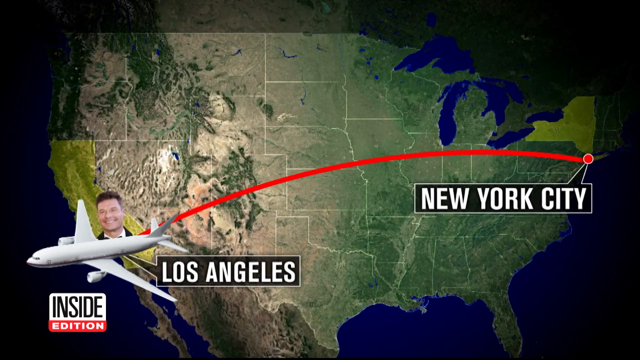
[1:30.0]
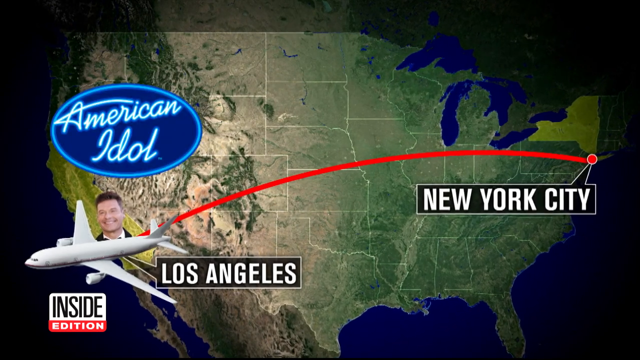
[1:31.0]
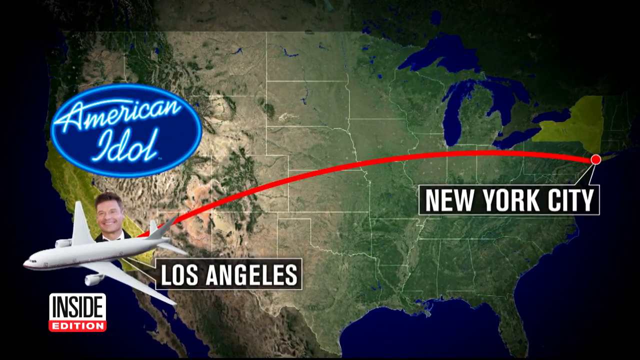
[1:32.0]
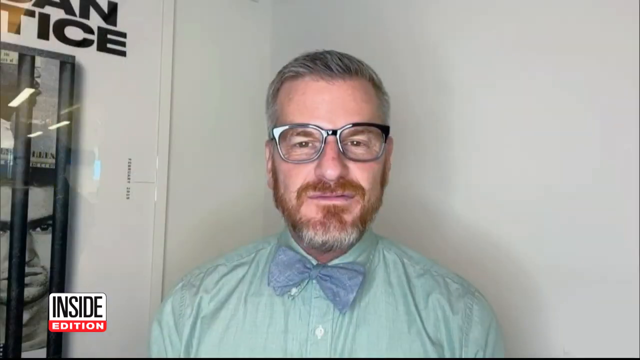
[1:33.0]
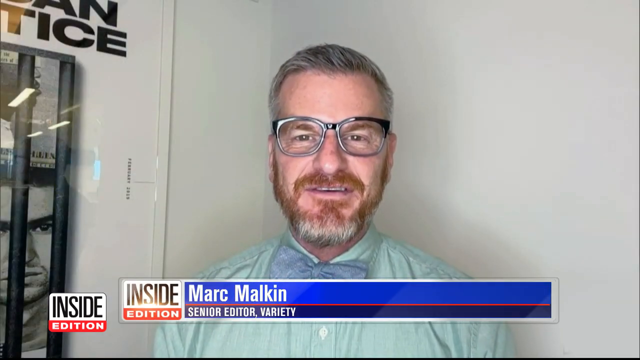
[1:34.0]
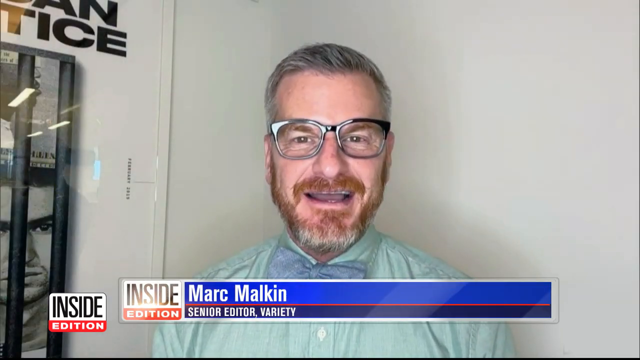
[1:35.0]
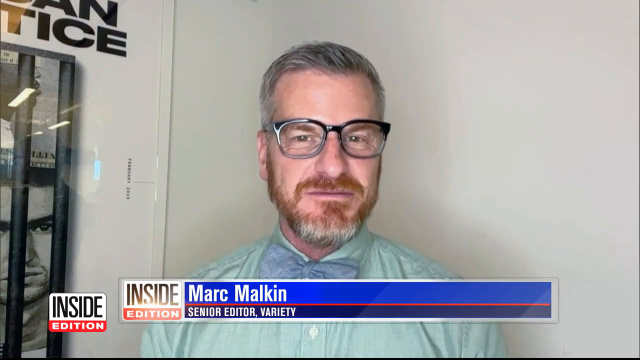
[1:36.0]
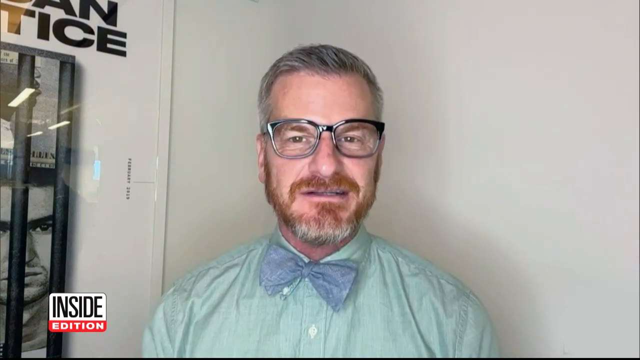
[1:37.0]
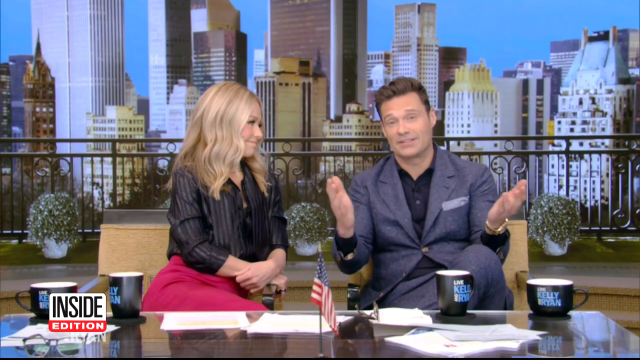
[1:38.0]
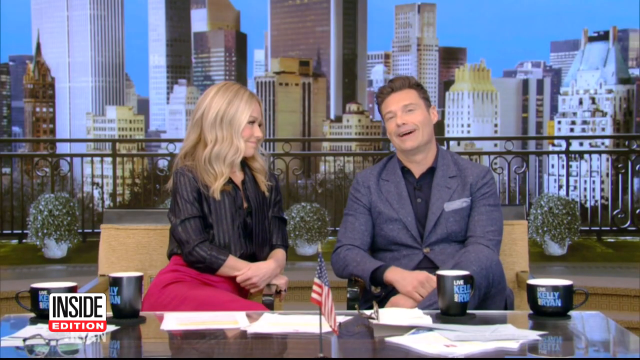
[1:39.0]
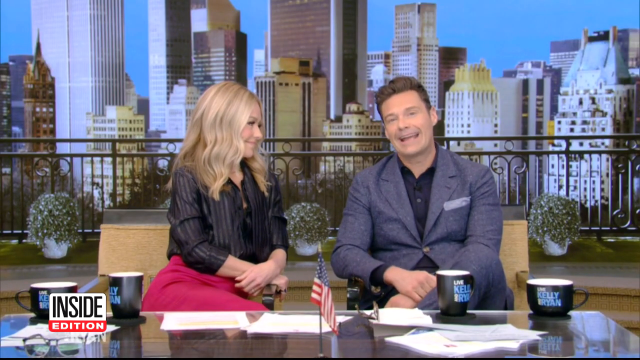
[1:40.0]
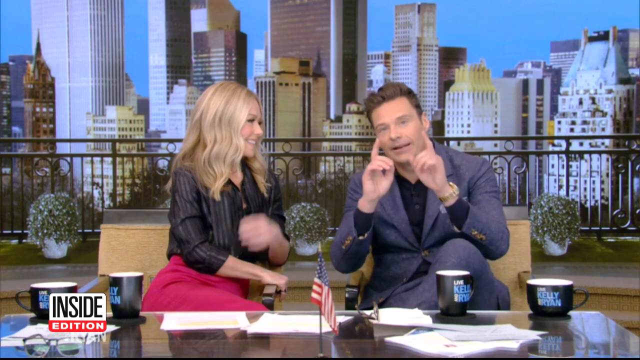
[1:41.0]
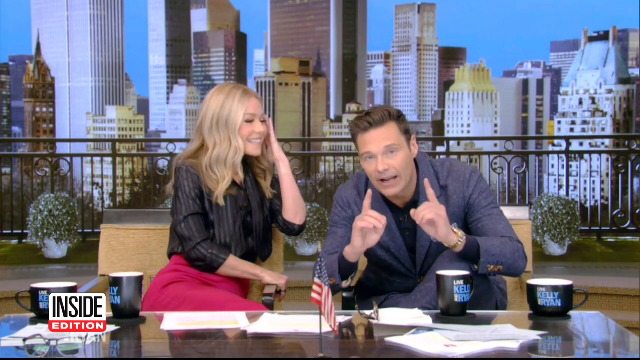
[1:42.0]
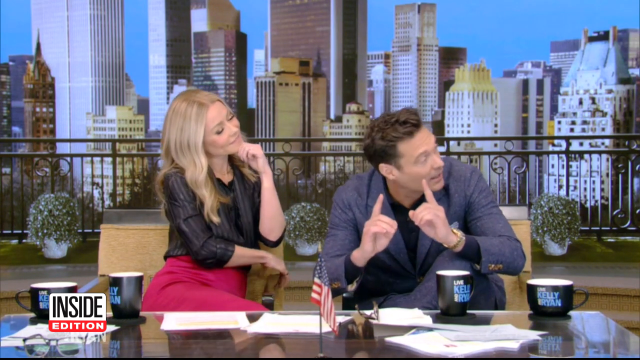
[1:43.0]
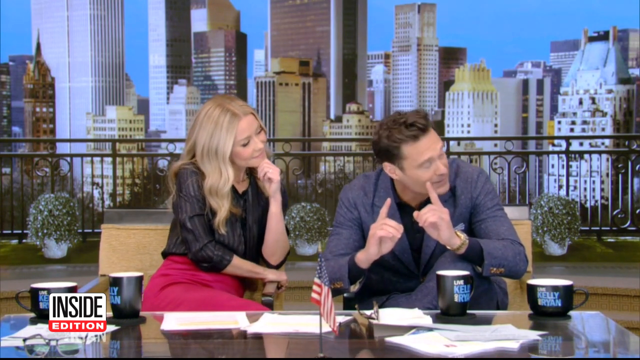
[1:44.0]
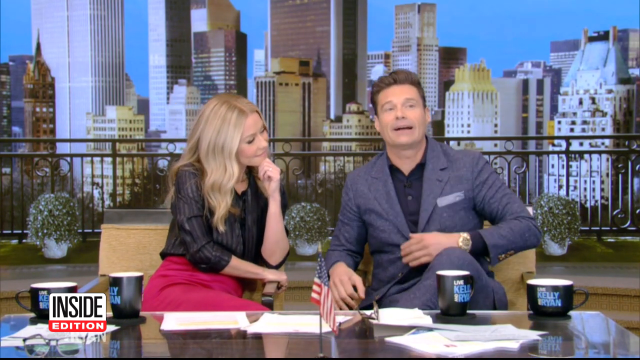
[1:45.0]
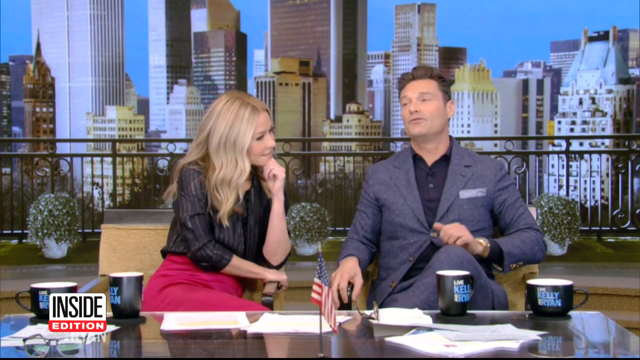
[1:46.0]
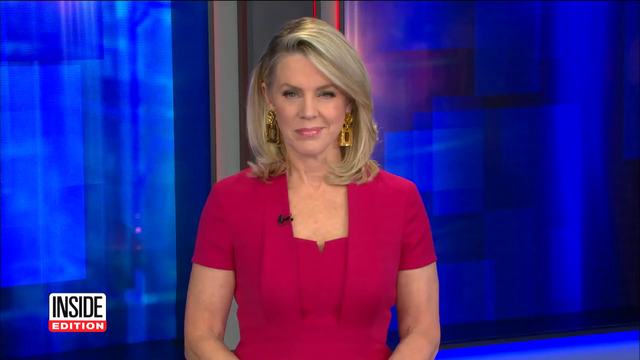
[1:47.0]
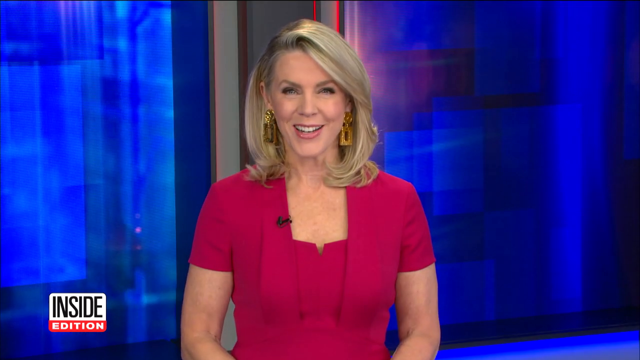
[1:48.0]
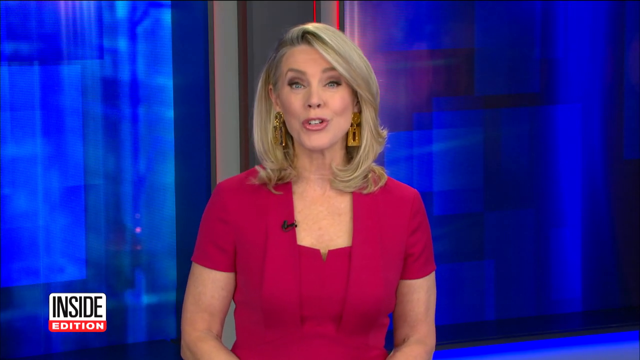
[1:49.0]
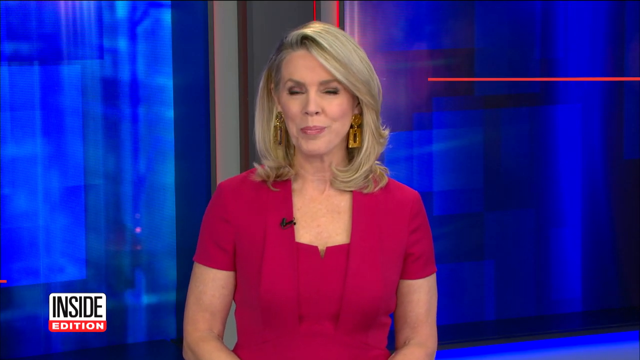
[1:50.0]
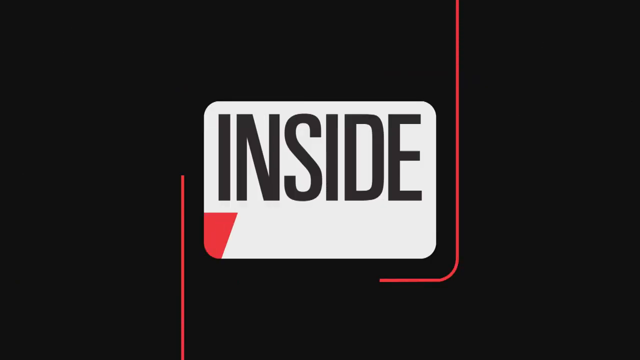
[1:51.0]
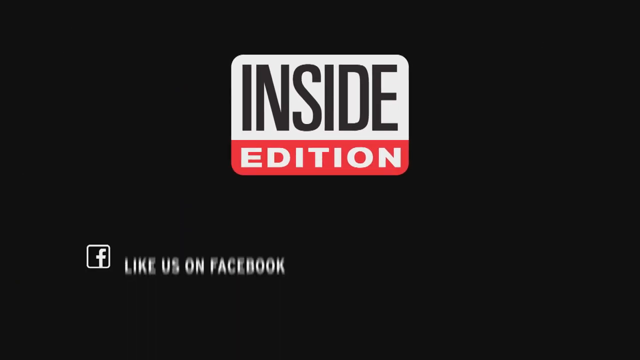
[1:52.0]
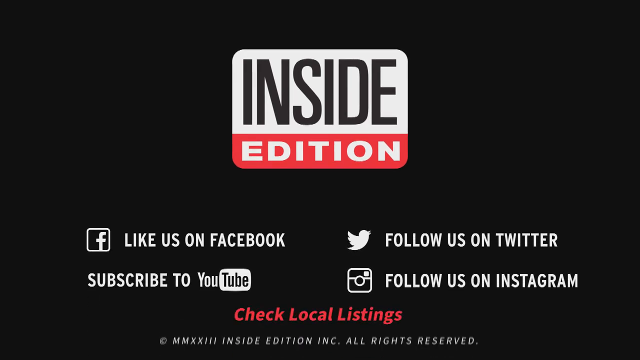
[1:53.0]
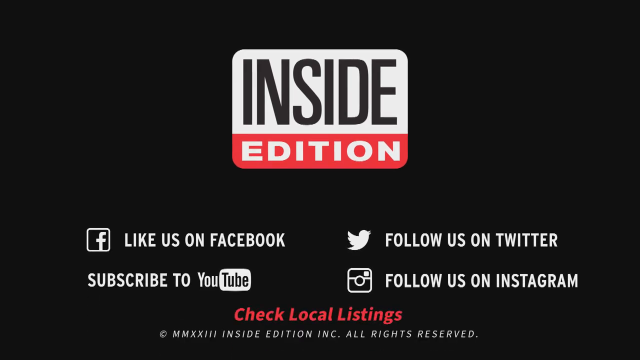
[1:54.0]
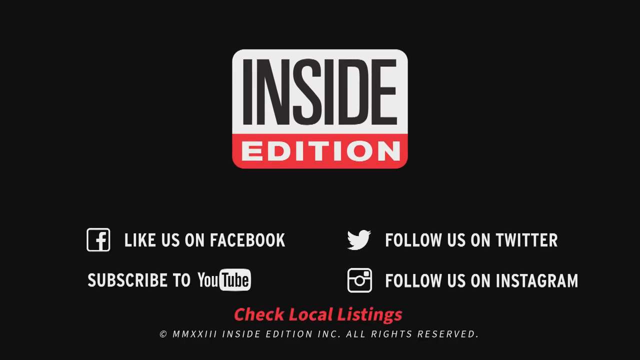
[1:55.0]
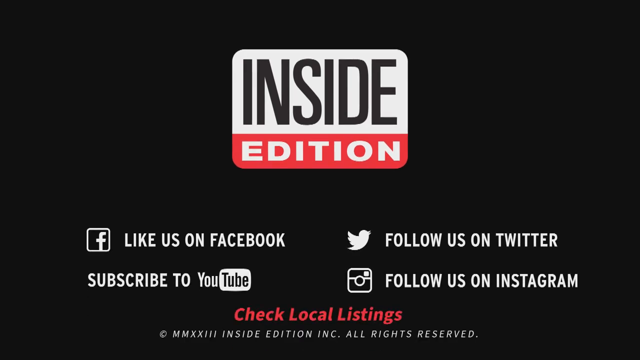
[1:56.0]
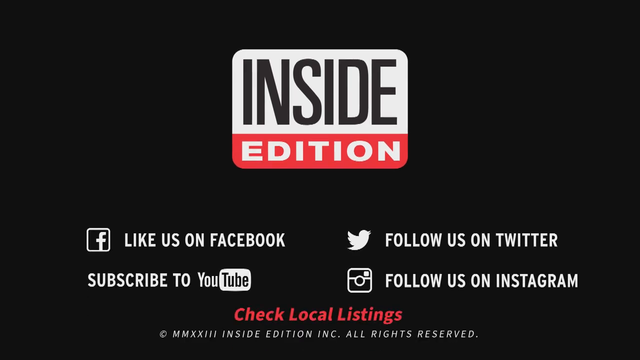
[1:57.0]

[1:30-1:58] The map of the United States shows Ryan Seacrest traveling from New York City over to Los Angeles. The camera then switches to a middle-aged white man with gray hair and a red and gray beard, wearing thick black-framed glasses. He is identified as Mark Malkin, senior editor of Variety, and speaks directly to the camera. The video cuts back to the initial shot of Kelly Ripa and Ryan Seacrest sitting at their talk show desk talking with one another, in their original outfits: Kelly in a black sequin shirt and pink skirt, Ryan in a blue-gray suit. The video returns to the newscasting station, where the initial reporter with blonde hair and a pink dress speaks directly to the camera. After this, the Inside Edition logo appears.